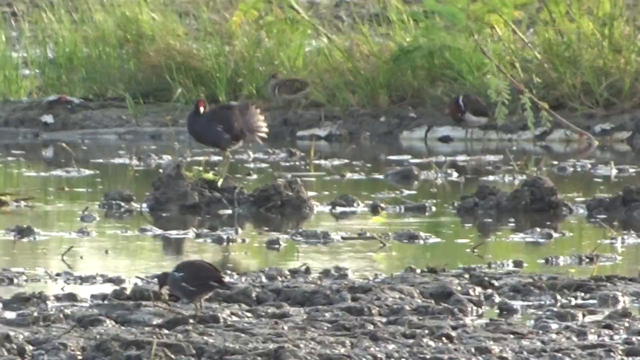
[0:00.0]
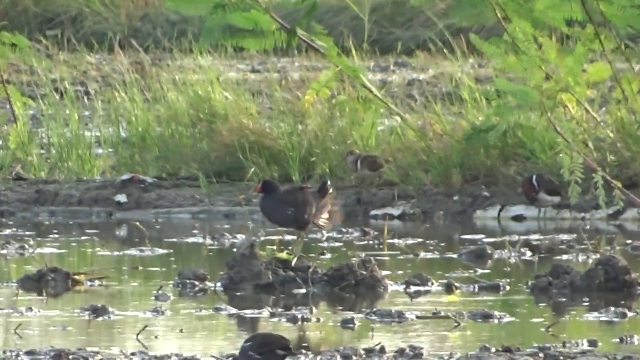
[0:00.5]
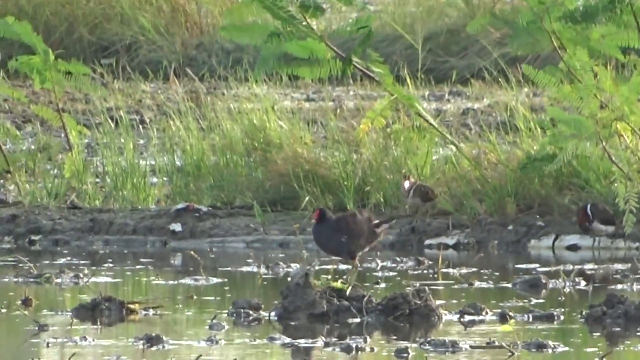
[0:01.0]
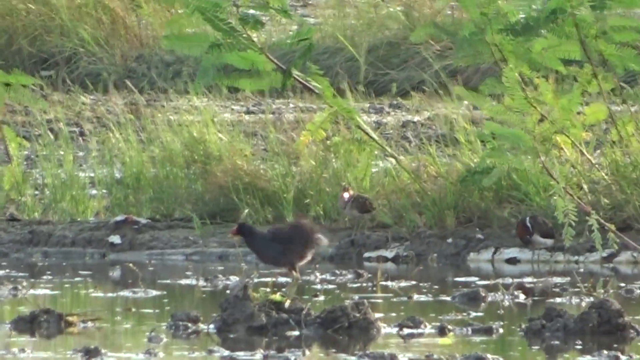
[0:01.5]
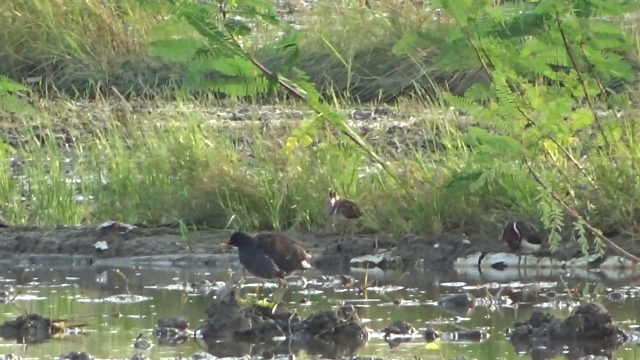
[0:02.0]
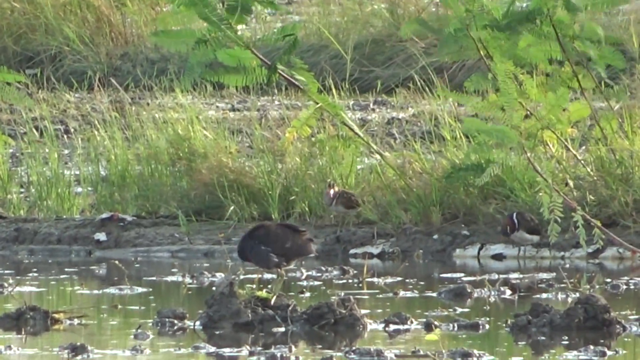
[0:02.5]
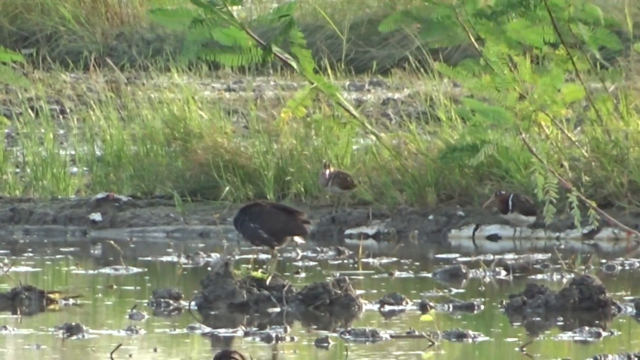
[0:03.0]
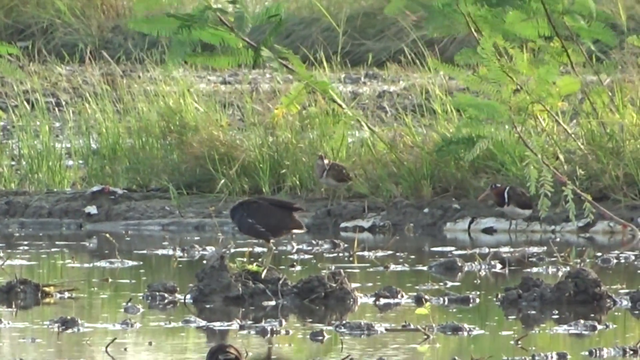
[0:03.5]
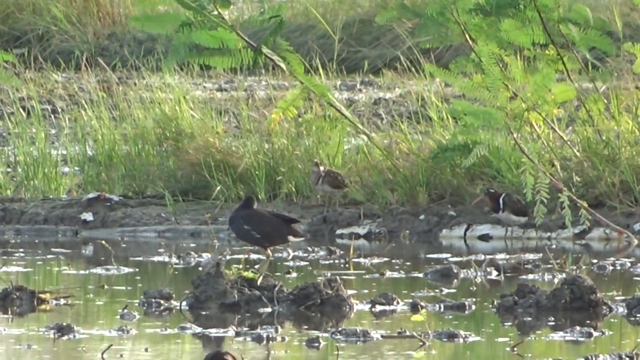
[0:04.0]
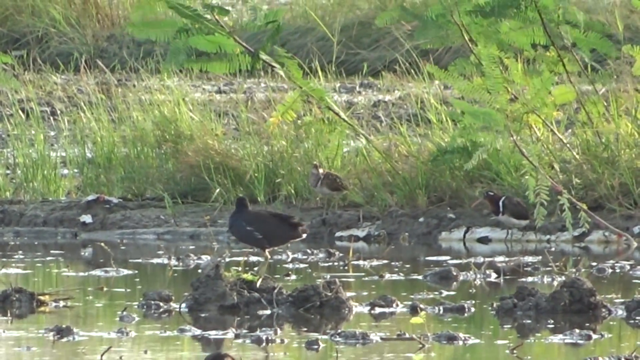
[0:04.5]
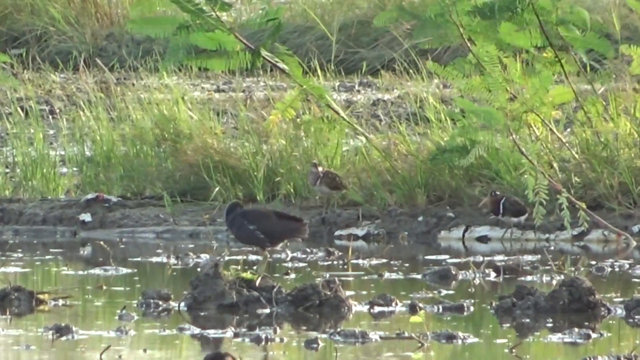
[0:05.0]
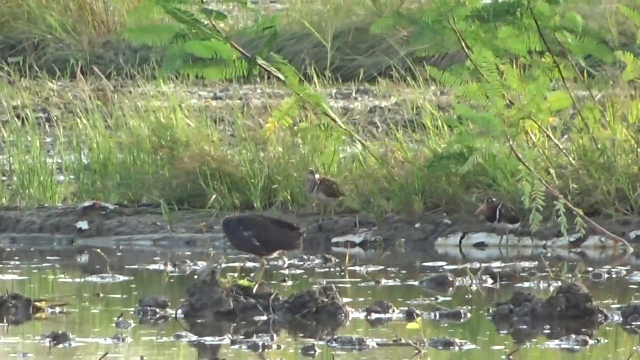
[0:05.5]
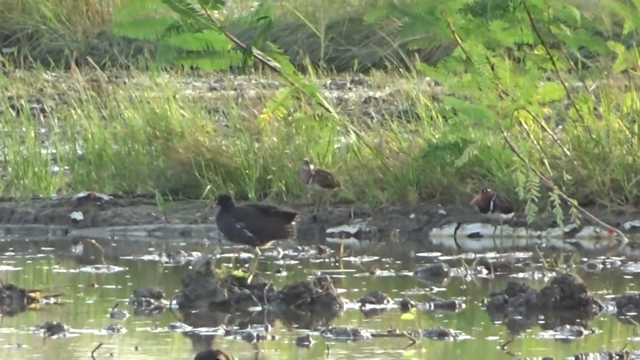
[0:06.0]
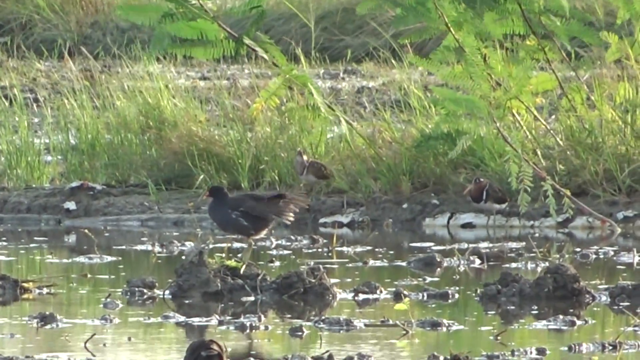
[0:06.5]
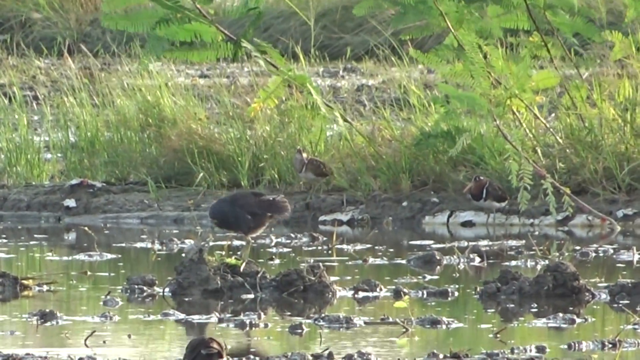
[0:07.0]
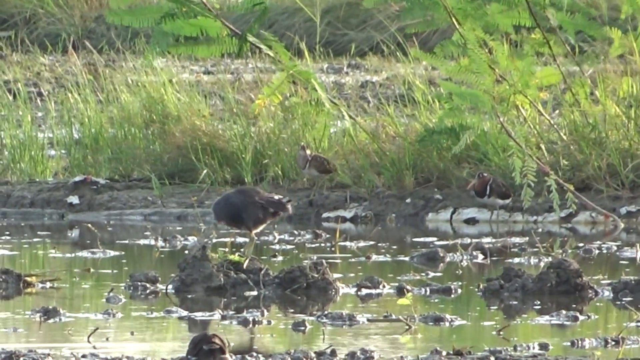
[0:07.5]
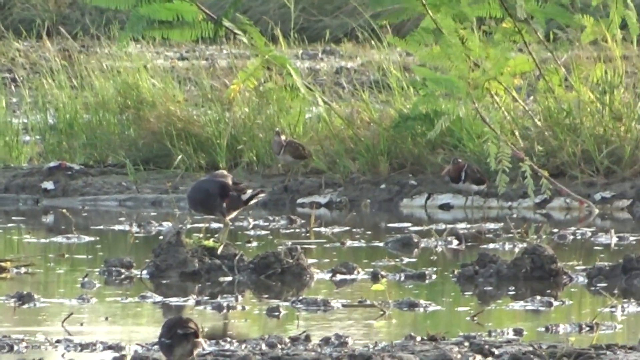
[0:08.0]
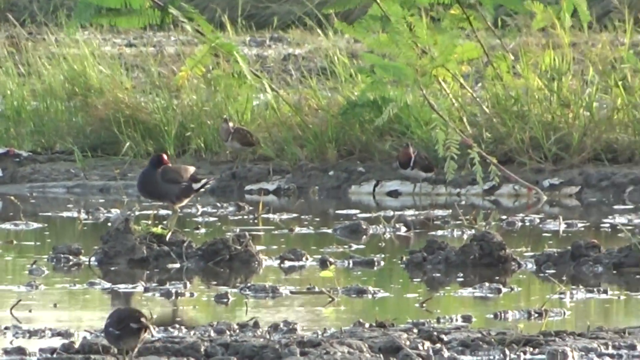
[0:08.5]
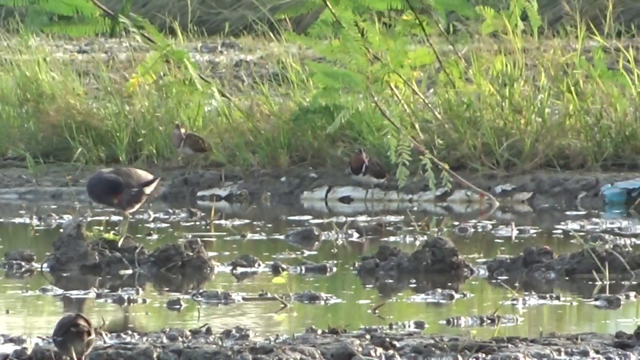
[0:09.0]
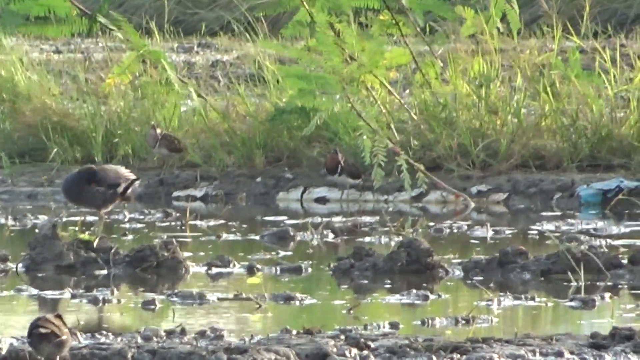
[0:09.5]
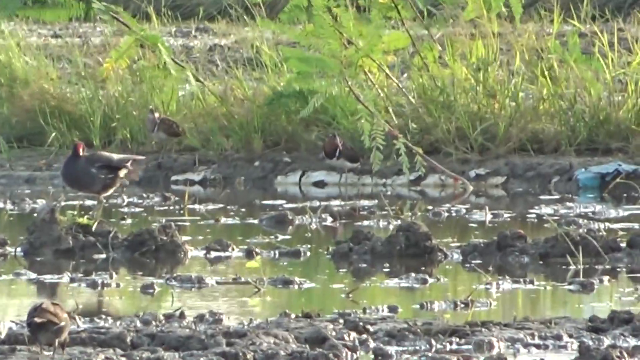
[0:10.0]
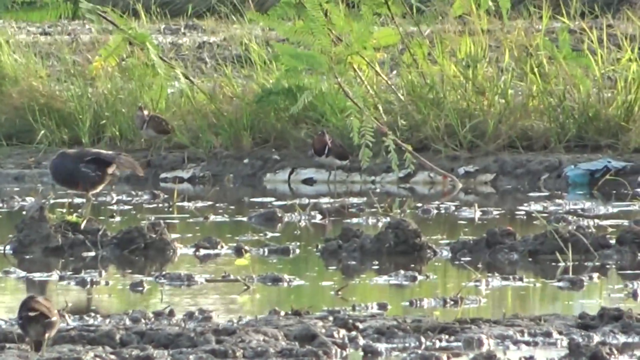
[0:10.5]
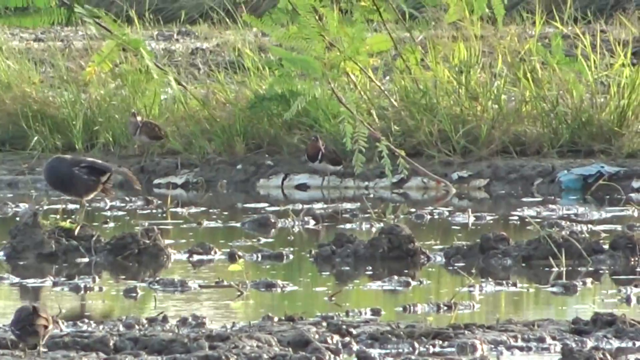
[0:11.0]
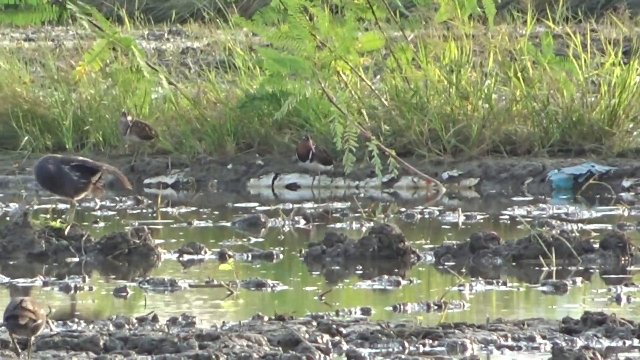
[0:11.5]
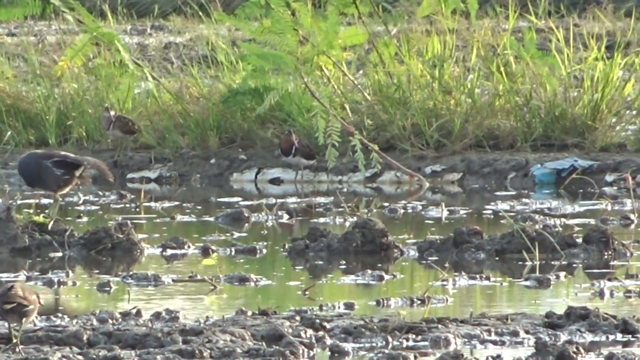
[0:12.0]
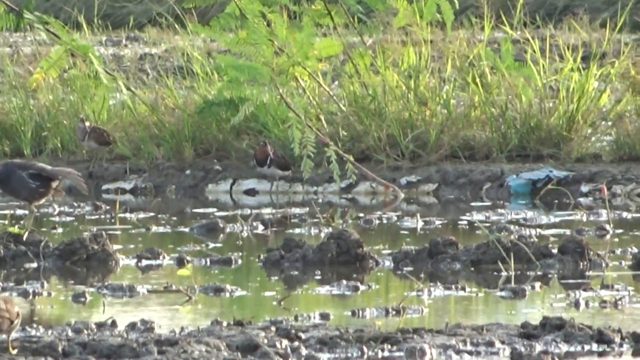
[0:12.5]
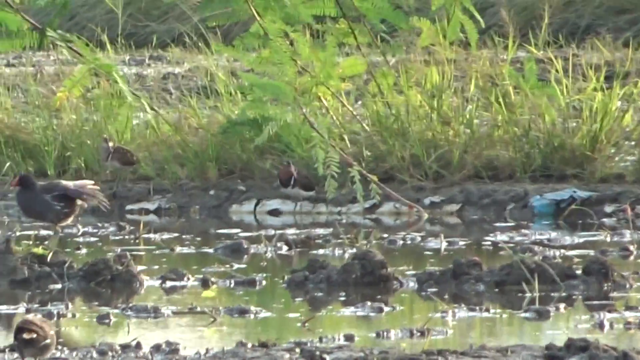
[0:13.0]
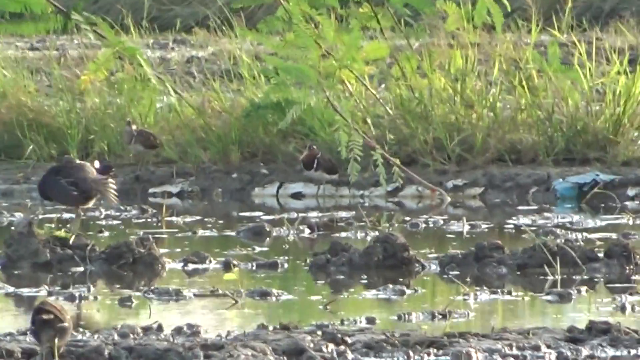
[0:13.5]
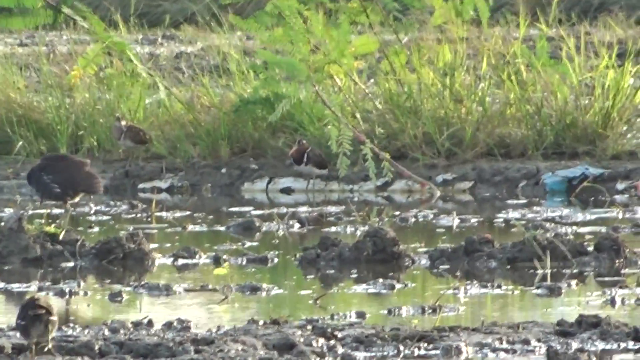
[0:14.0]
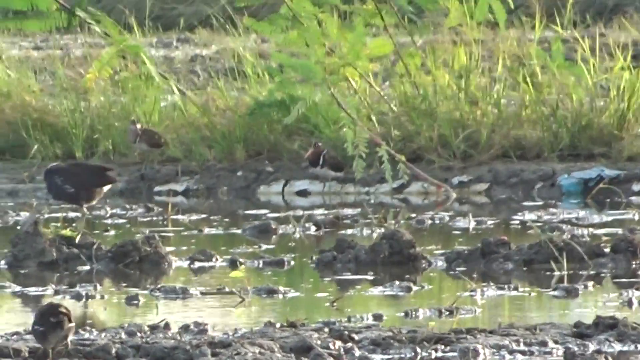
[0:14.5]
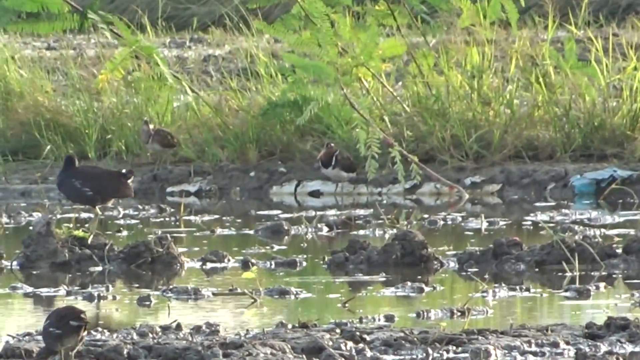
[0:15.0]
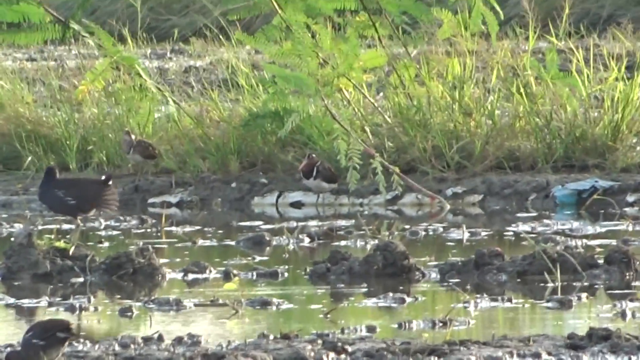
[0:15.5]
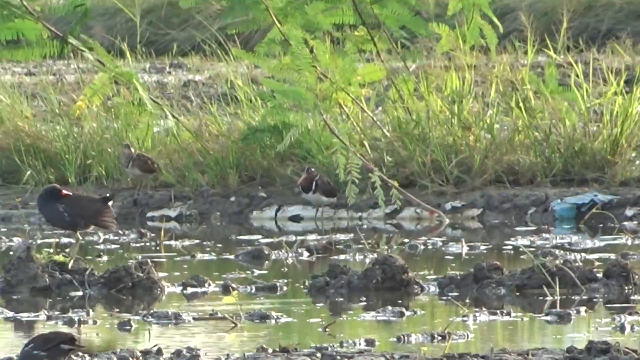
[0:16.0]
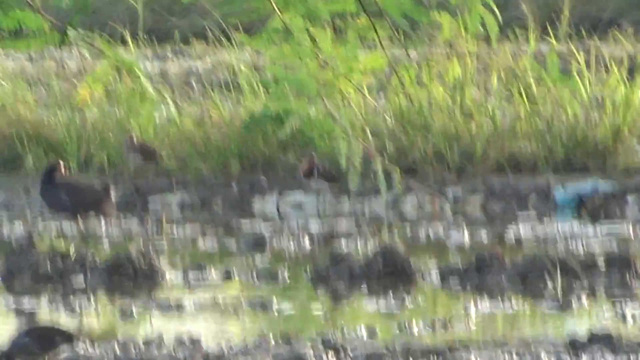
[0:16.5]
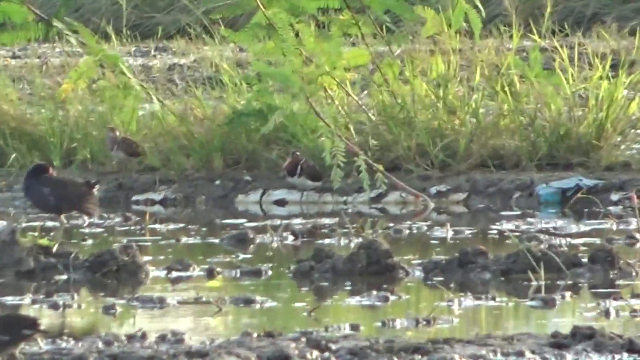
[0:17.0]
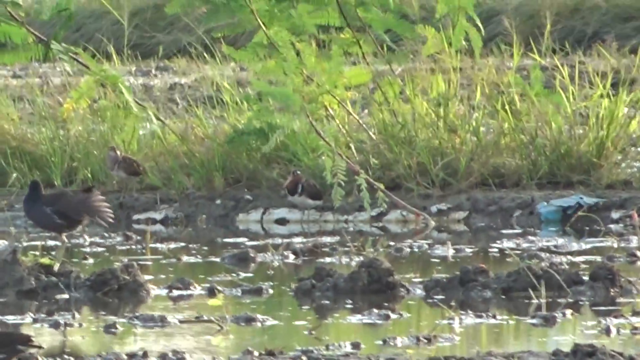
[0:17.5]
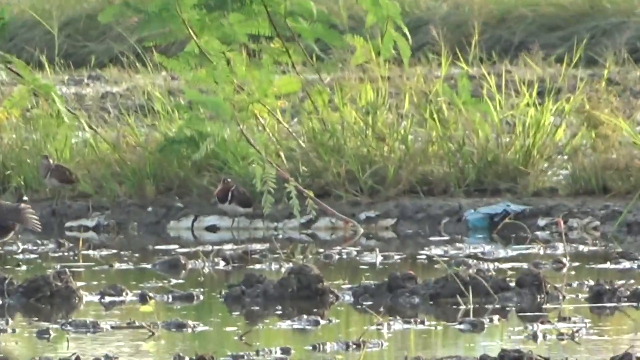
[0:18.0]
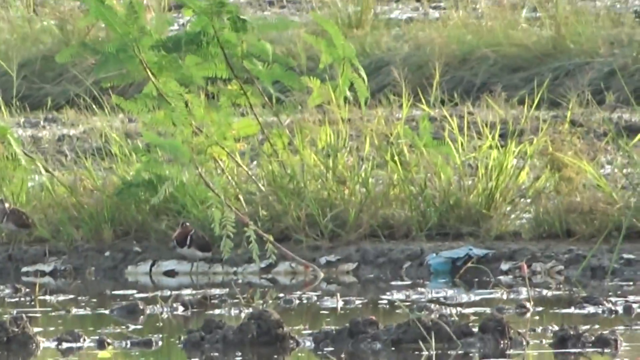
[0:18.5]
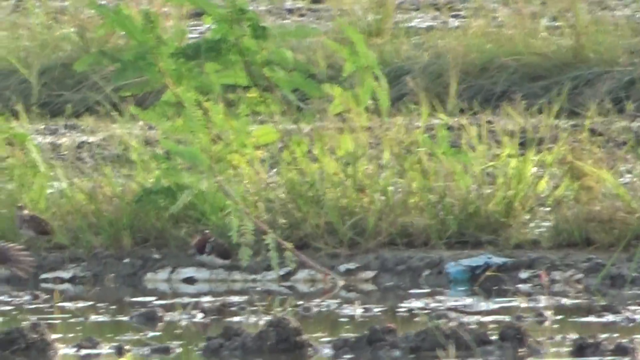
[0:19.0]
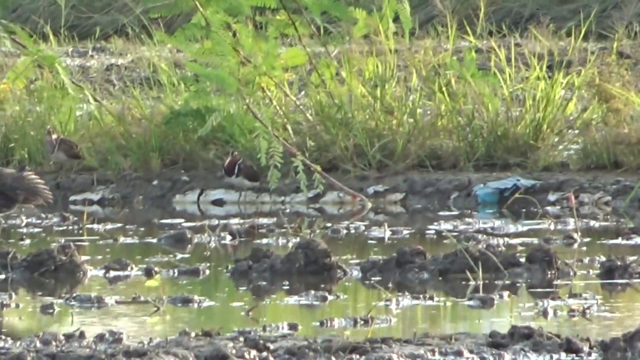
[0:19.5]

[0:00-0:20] Several birds are out in a swamp area with lots of greenery, water and lots of mud. There are about four or five birds of an unidentified kind. Some of them stand on the muddy area and some stand back by the greenery and shrubbery. One stands in the middle, sort of pecking at its feathers, apparently cleaning itself. A little debris is in the water, including a blue bag. There are some taller branches and some tall grass, and behind the green grass are a few pieces of dead grass. The water ripples. The bird in the middle flaps its feathers a little; it has a somewhat red face and a white beak, and it shakes its feathers around. The other birds more or less just stand there looking around. One bird walks in the muddy area pecking at the mud, probably looking for worms, while another bird just stands in the middle looking around.